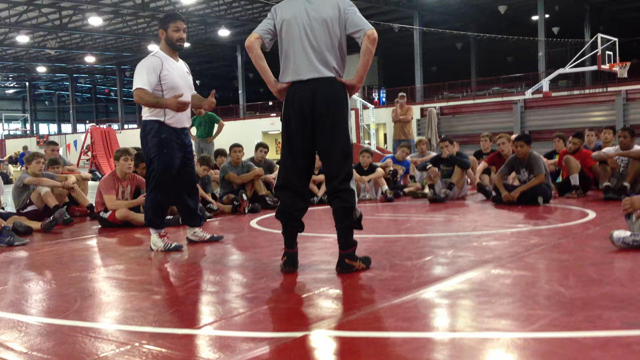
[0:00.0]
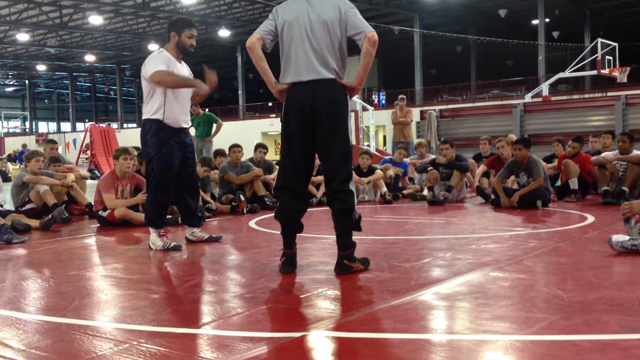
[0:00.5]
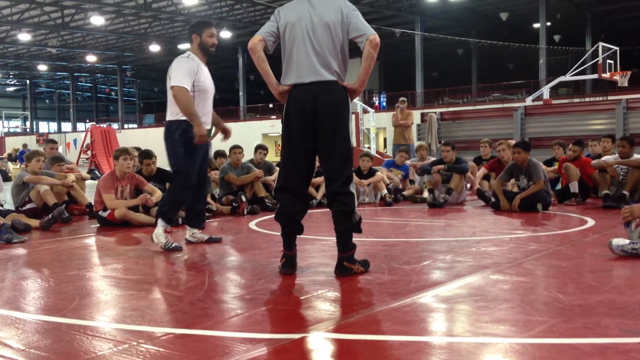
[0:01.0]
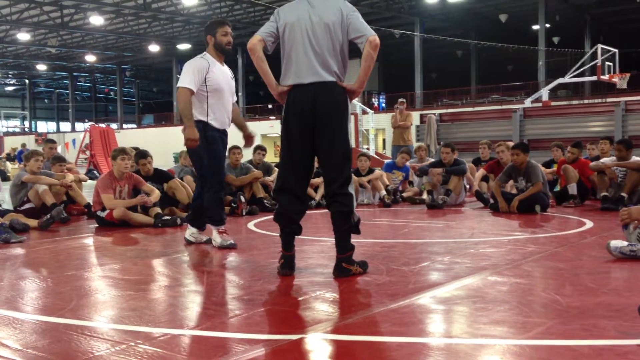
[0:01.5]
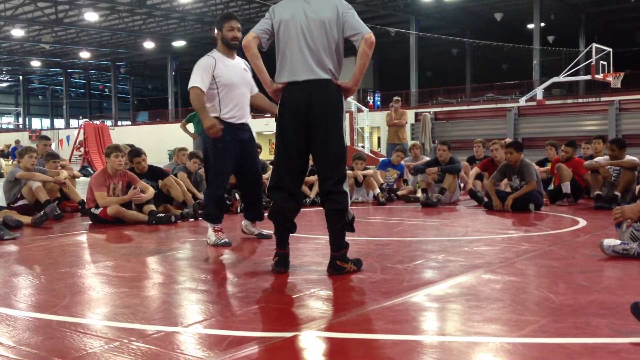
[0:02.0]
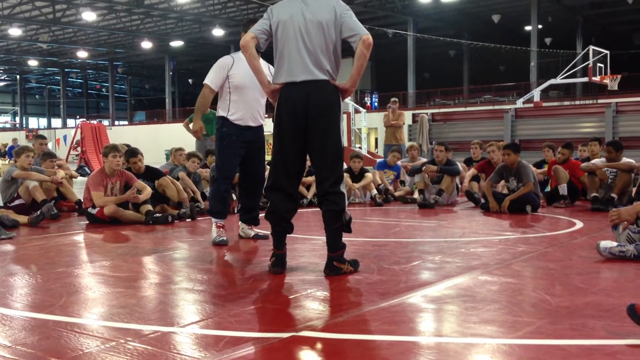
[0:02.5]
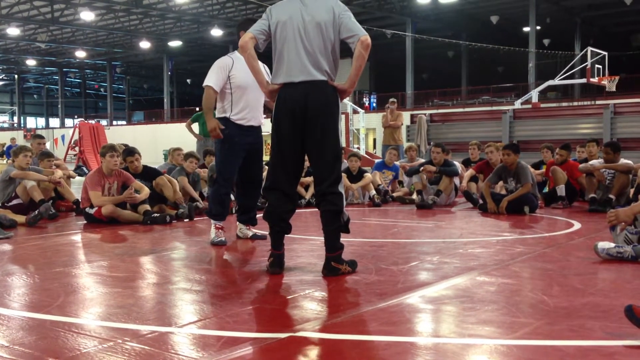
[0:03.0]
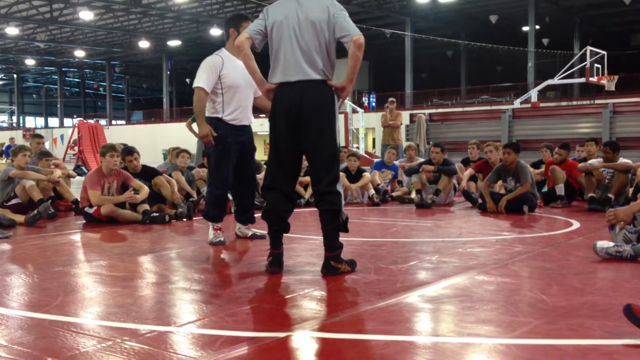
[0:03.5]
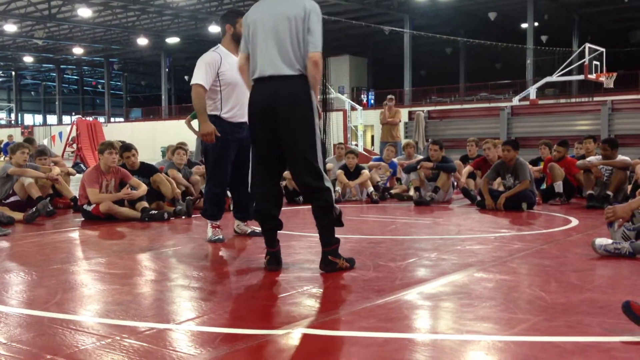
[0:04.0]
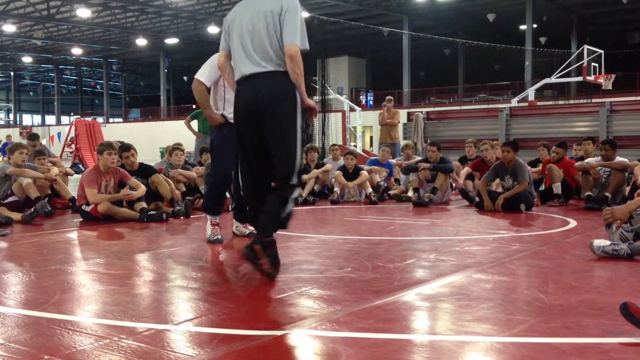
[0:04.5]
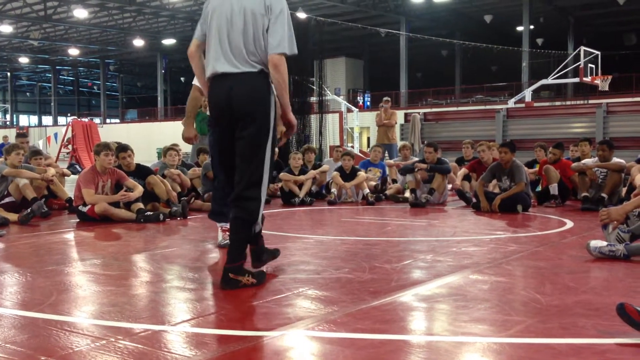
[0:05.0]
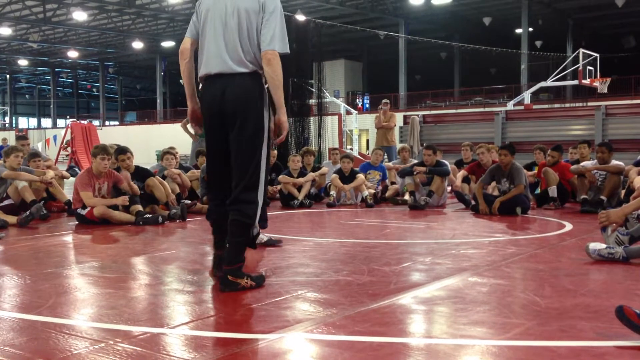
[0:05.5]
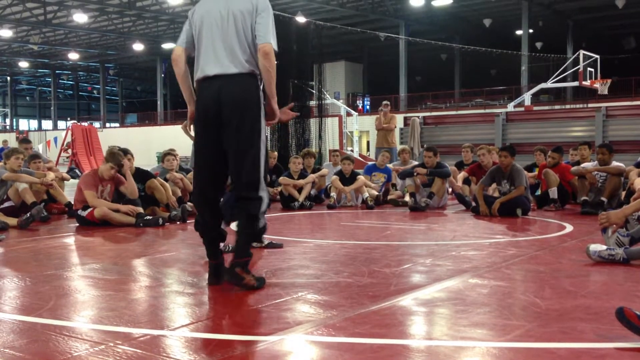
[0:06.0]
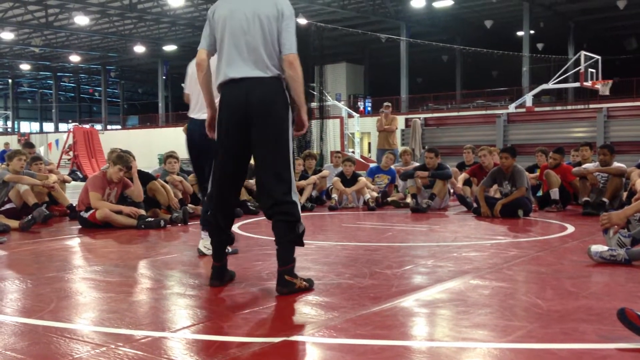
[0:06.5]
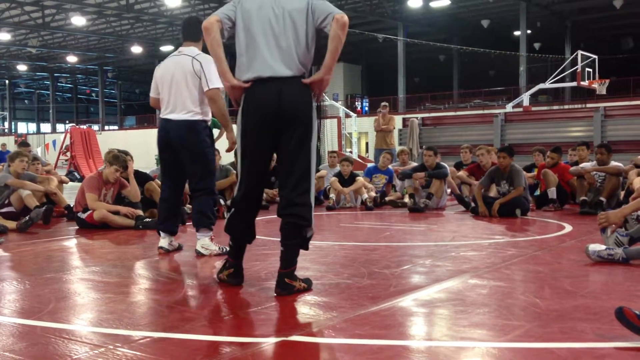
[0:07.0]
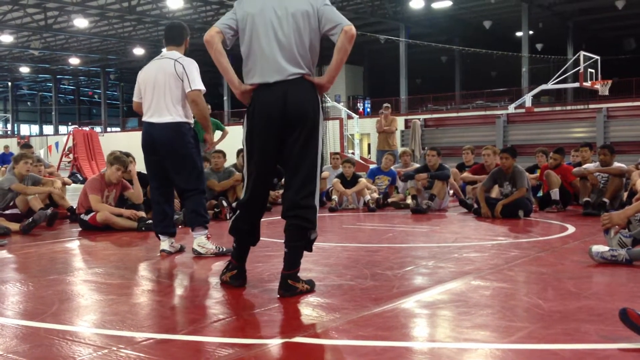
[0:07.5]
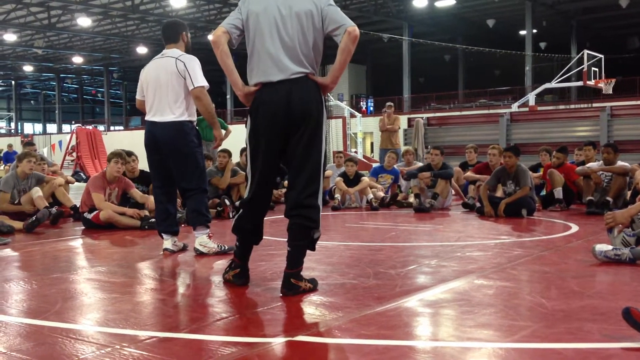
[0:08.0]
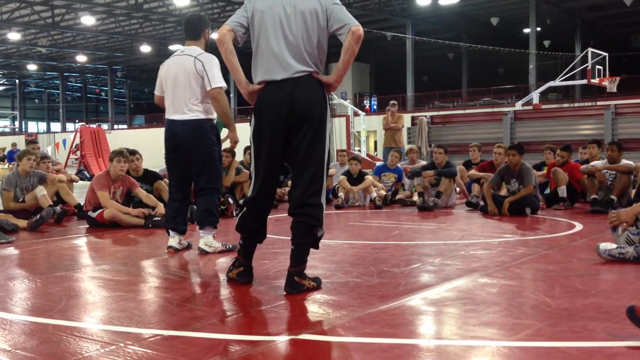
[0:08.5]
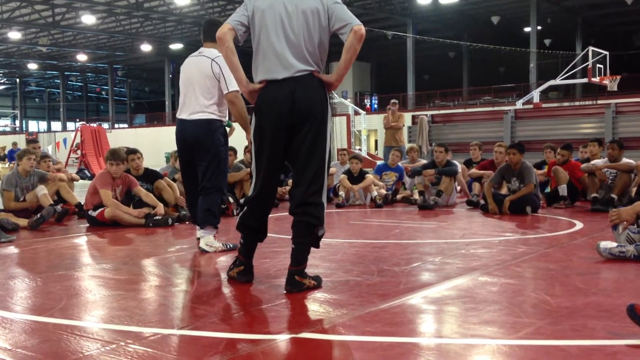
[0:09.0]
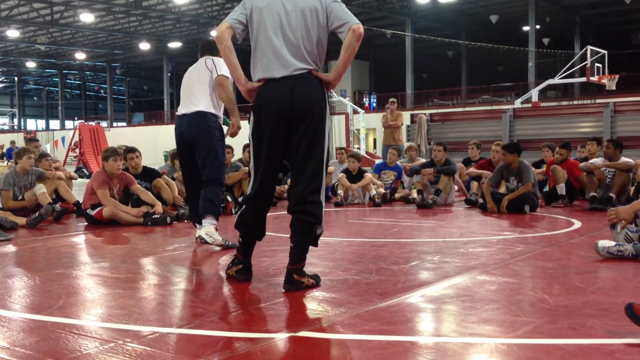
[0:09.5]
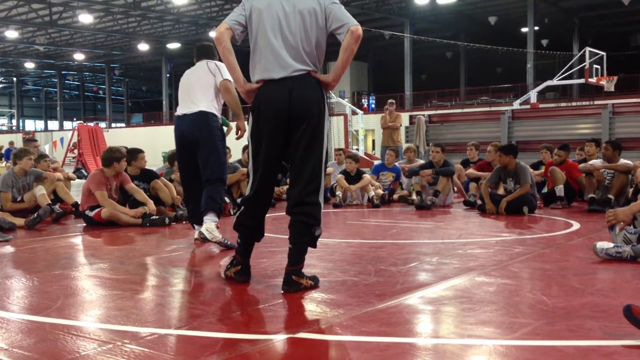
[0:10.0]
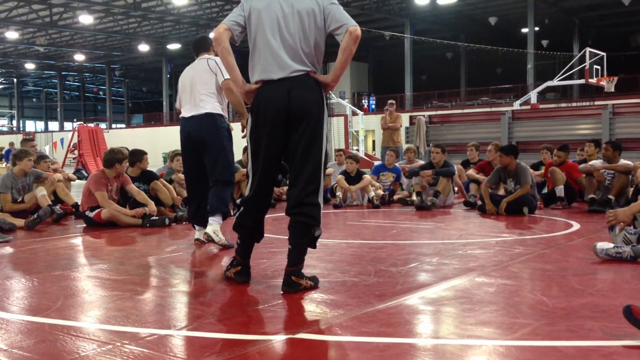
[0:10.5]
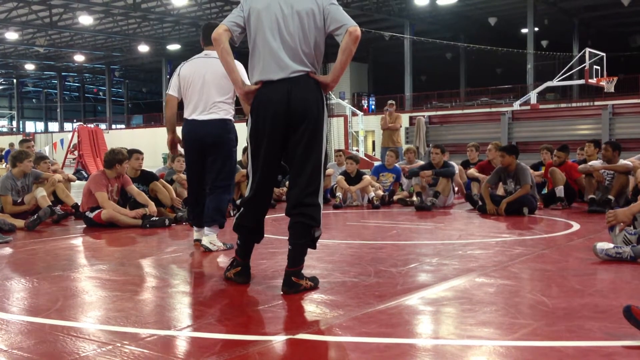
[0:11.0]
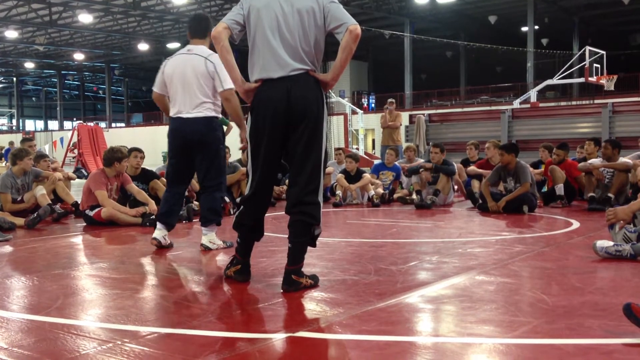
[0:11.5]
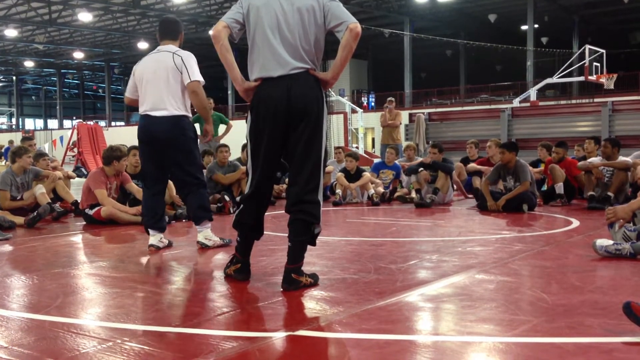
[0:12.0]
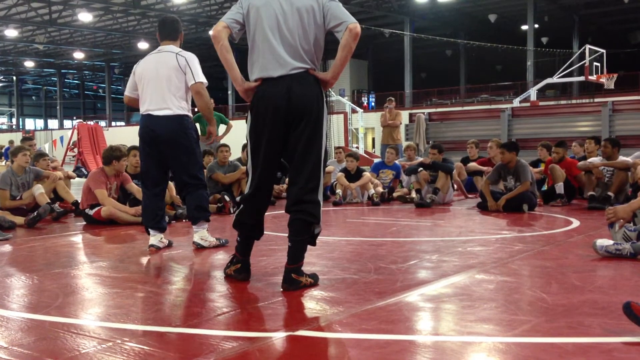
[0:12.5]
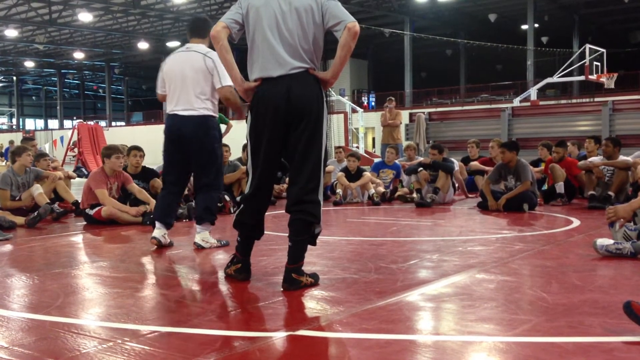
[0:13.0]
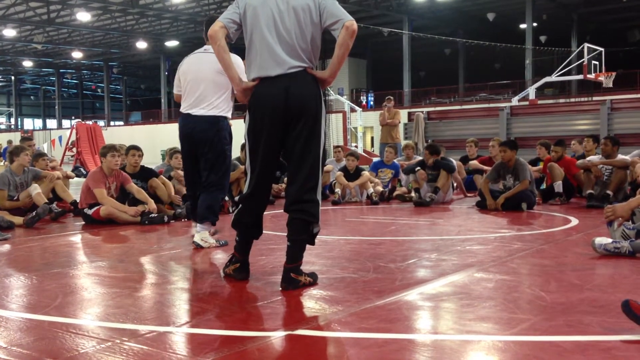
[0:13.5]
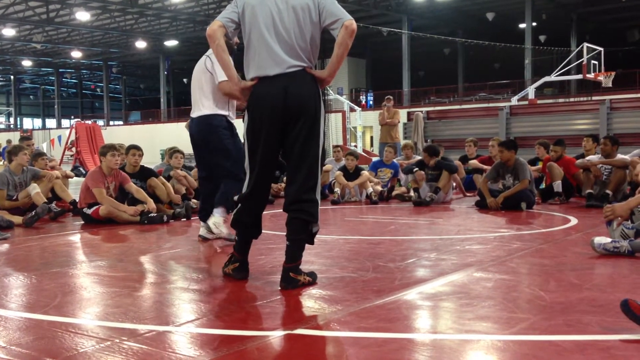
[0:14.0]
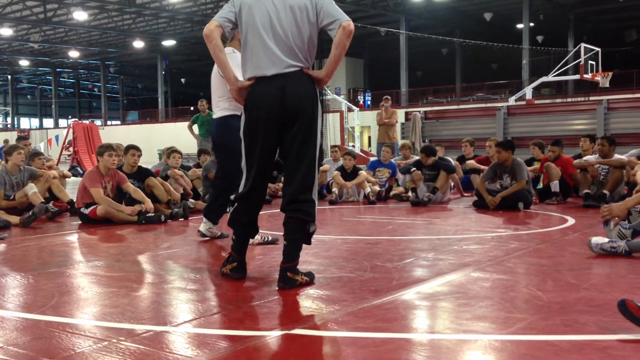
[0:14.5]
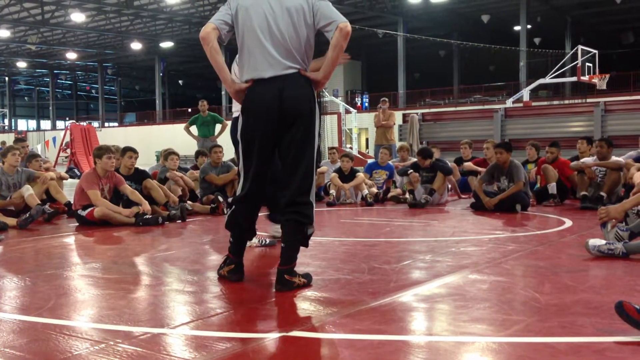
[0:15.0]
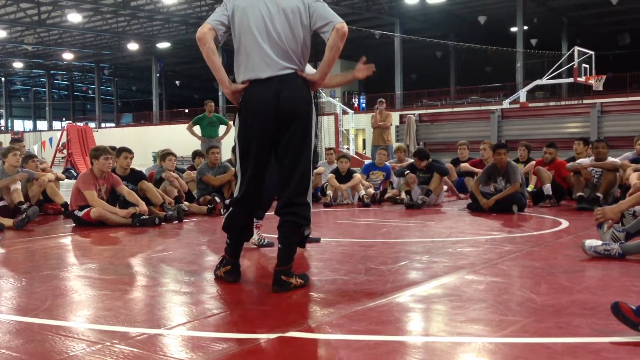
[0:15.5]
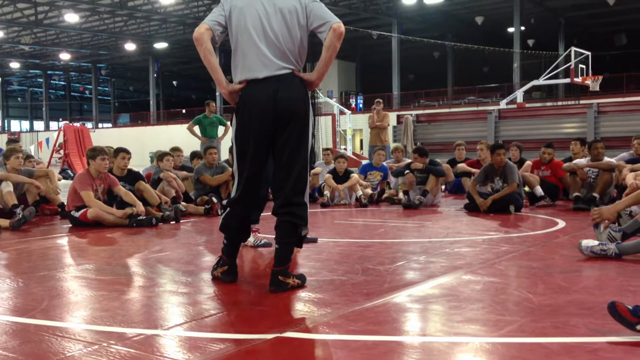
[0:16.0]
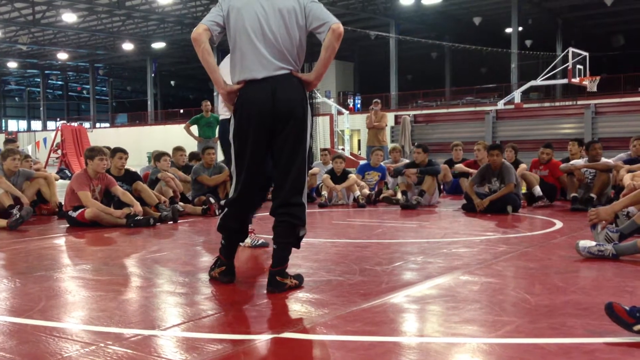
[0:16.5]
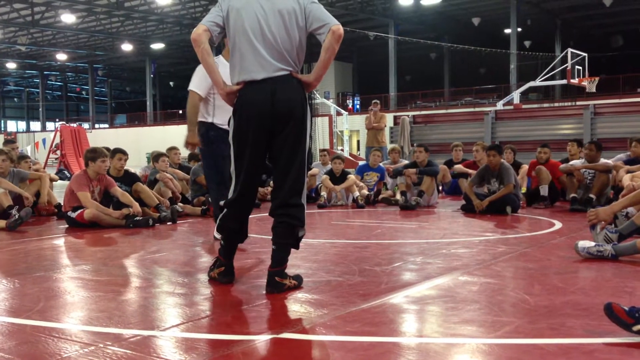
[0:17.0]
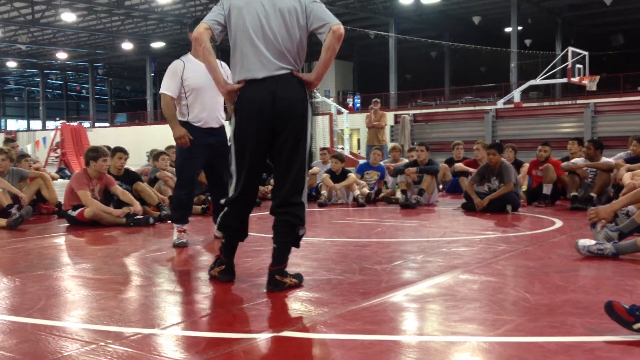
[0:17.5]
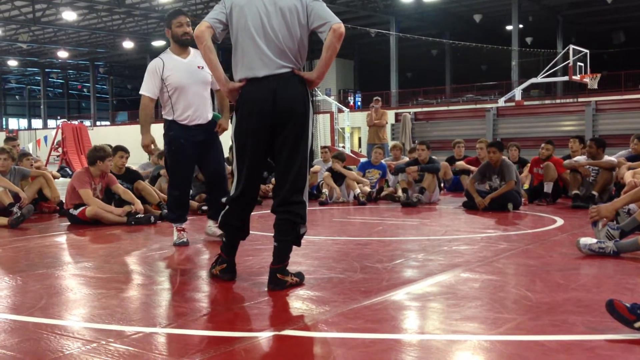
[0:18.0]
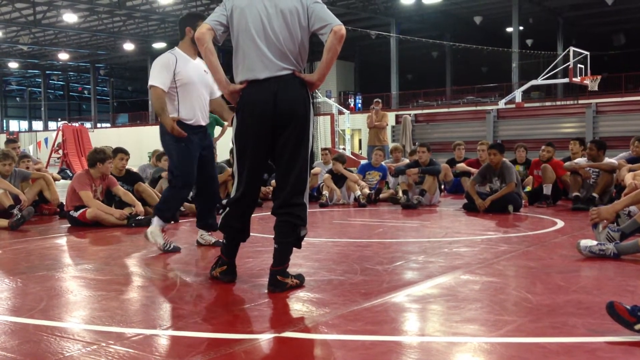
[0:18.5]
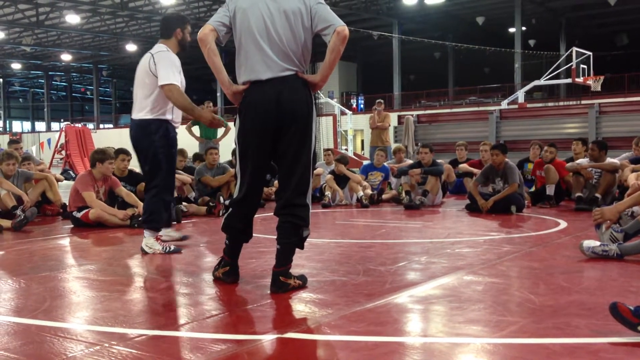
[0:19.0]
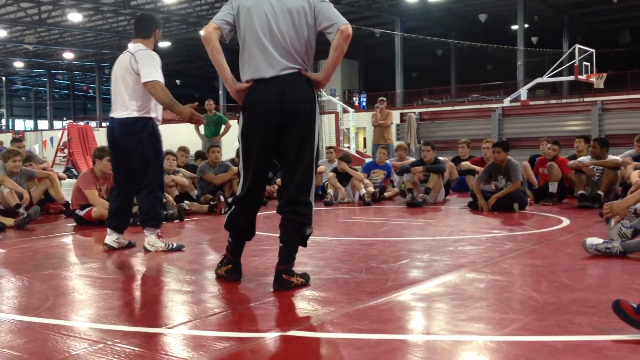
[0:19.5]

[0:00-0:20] The scene takes place in what looks like a very large gym, with a basketball hoop in the background, metal rafters on the ceiling, and bright drop lights casting a harsh glare that reflects off a red floor marked with typical gymnasium circles. About two dozen teenage boys in shorts, t-shirts and sneakers sit in a circle surrounding two adult men, both wearing black sweatpants, one in a white shirt and the other in a grey shirt. The man in the white t-shirt seems to be speaking, gesturing with his arms and talking animatedly while the boys watch. The boys seem to be slightly fidgeting, turning their heads and looking in different directions as he talks. The man in the gray shirt stands with his hands on his hip, listening to the man in the white shirt.